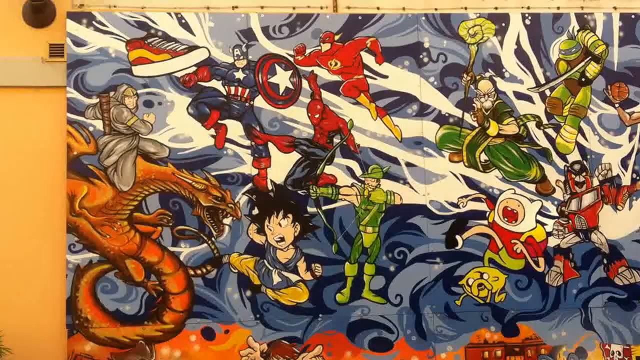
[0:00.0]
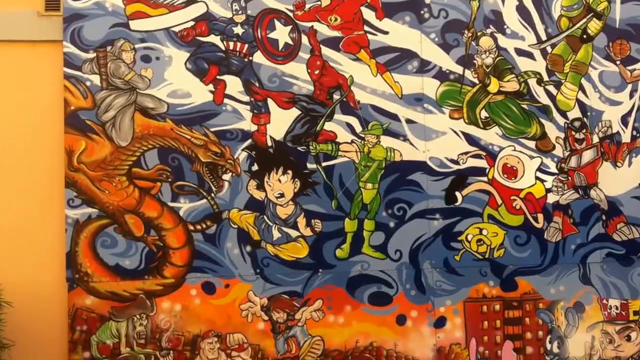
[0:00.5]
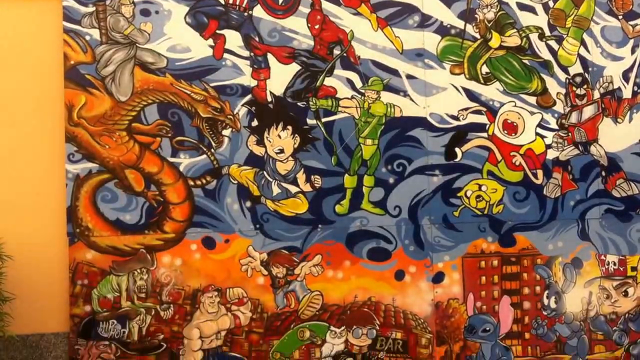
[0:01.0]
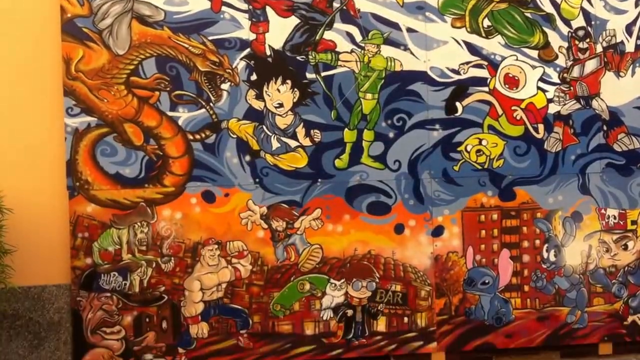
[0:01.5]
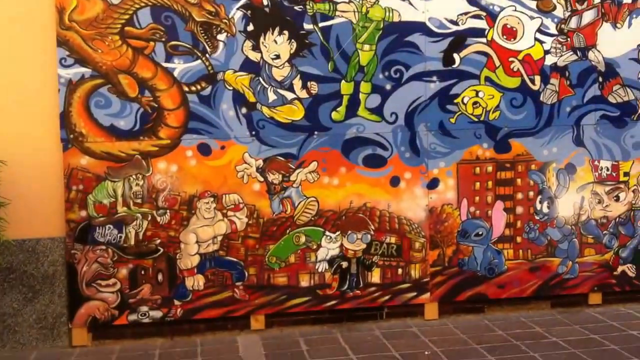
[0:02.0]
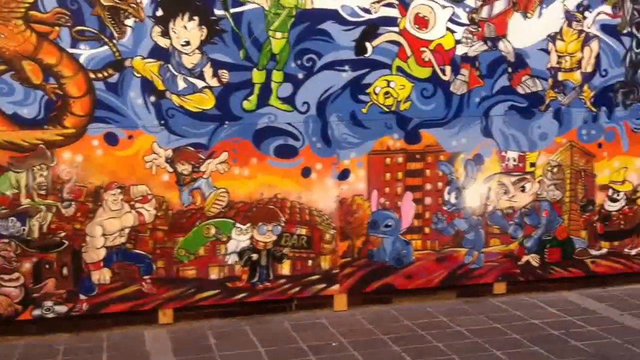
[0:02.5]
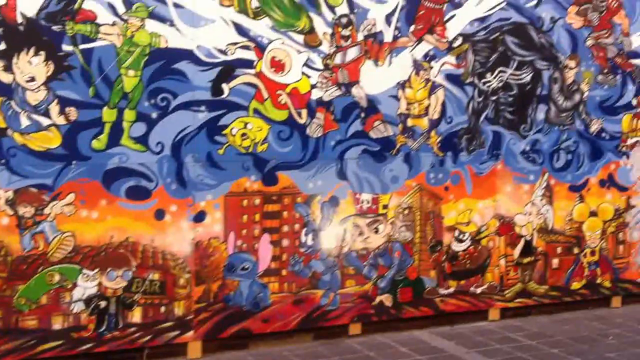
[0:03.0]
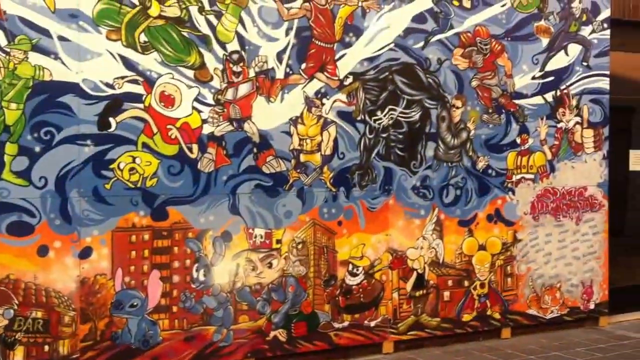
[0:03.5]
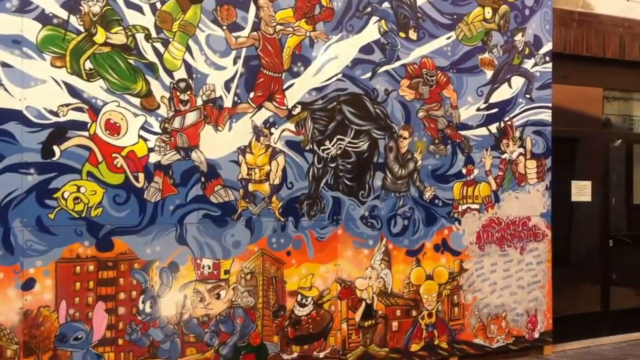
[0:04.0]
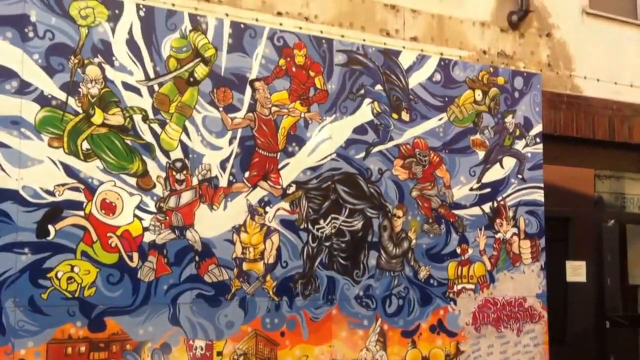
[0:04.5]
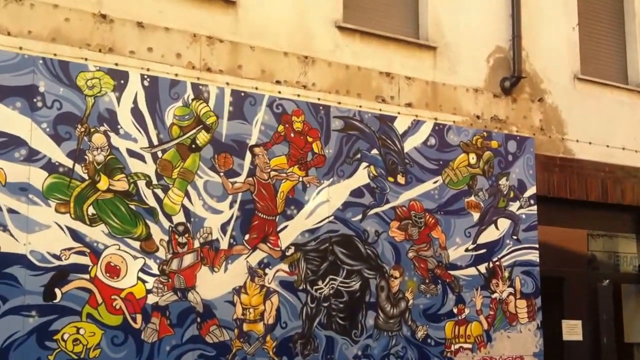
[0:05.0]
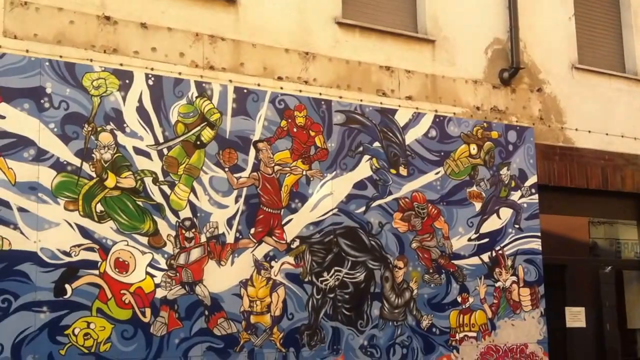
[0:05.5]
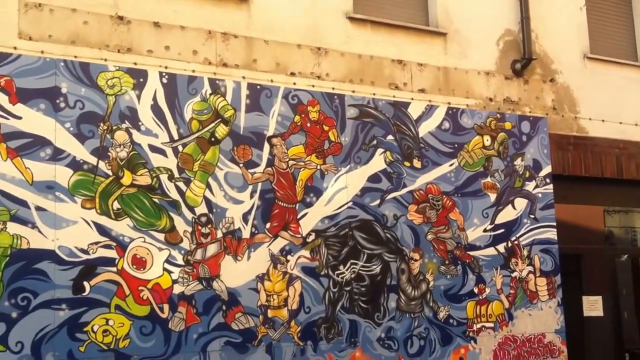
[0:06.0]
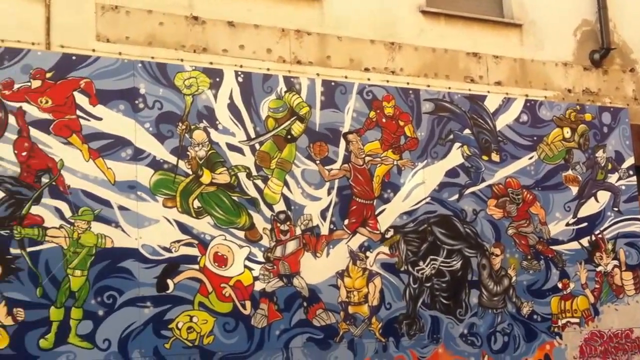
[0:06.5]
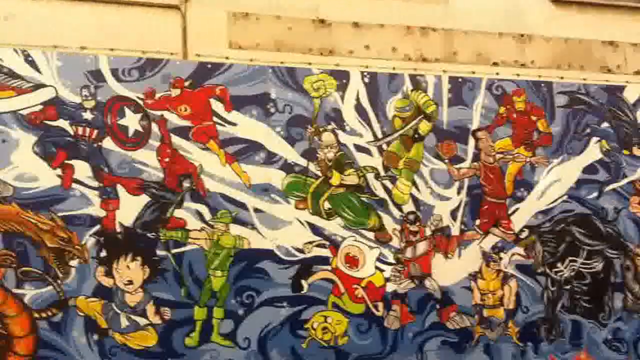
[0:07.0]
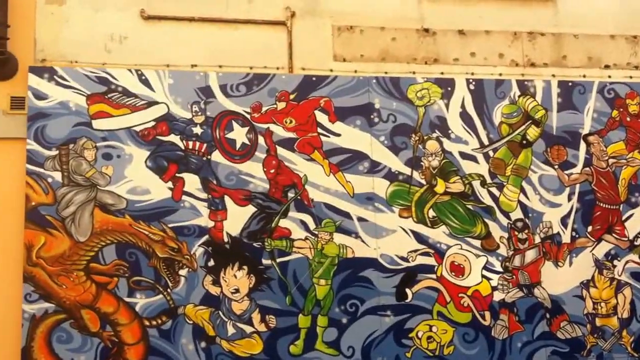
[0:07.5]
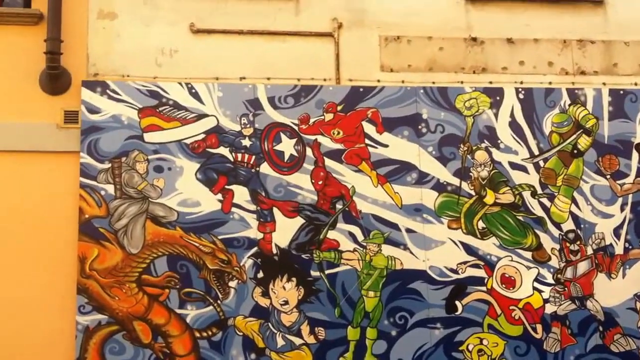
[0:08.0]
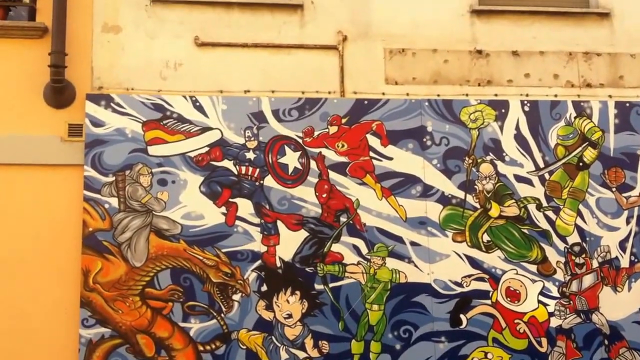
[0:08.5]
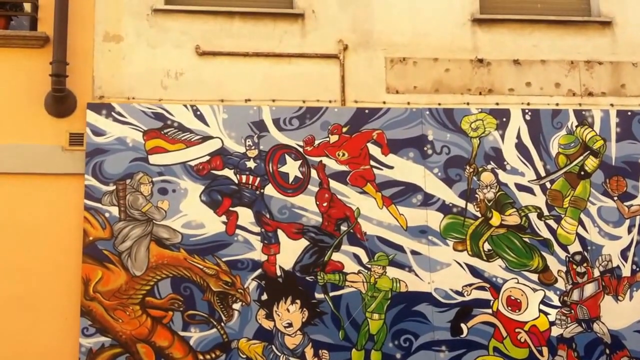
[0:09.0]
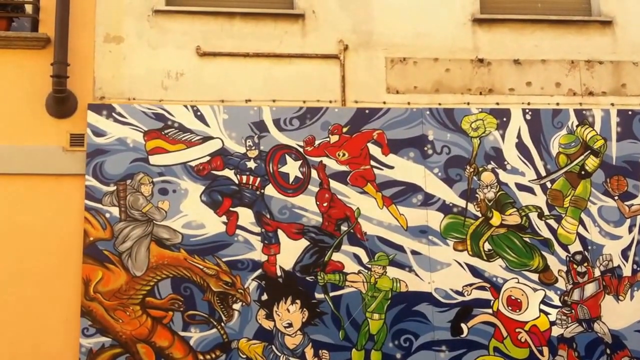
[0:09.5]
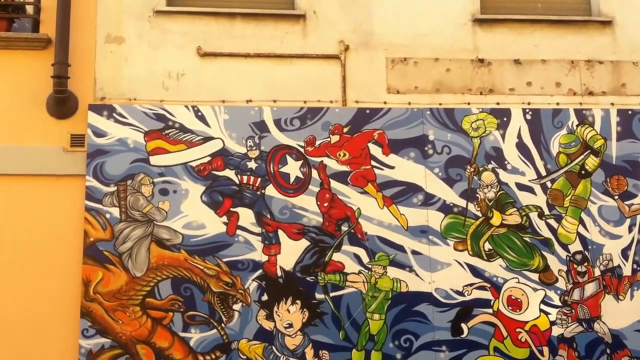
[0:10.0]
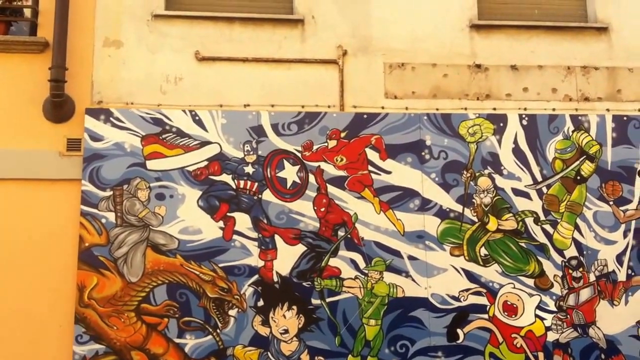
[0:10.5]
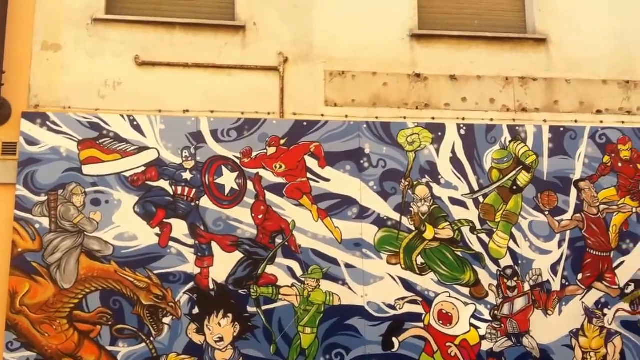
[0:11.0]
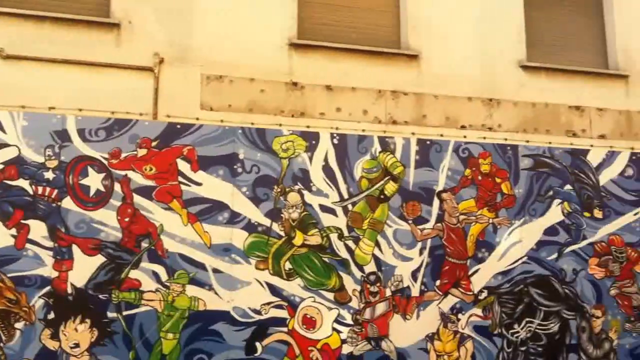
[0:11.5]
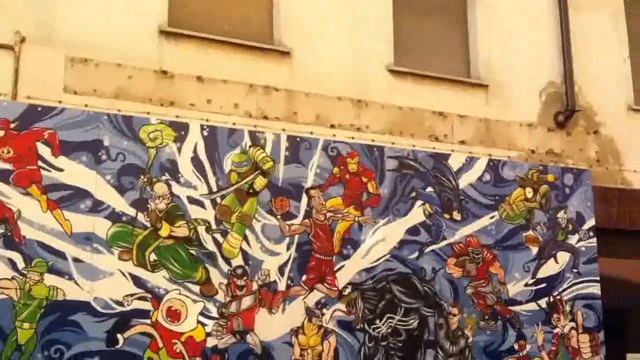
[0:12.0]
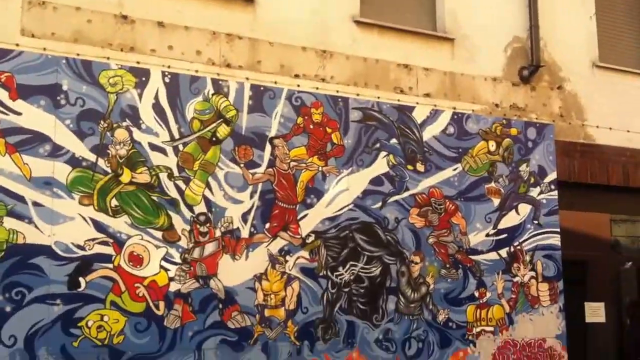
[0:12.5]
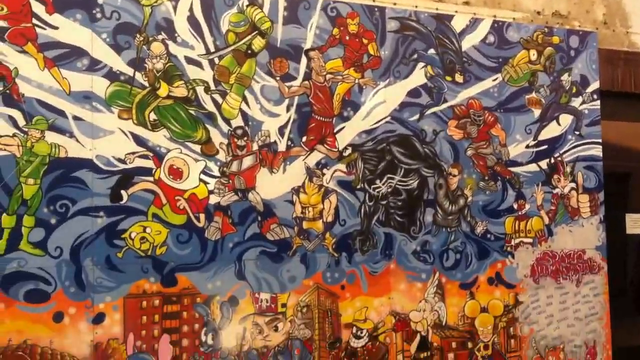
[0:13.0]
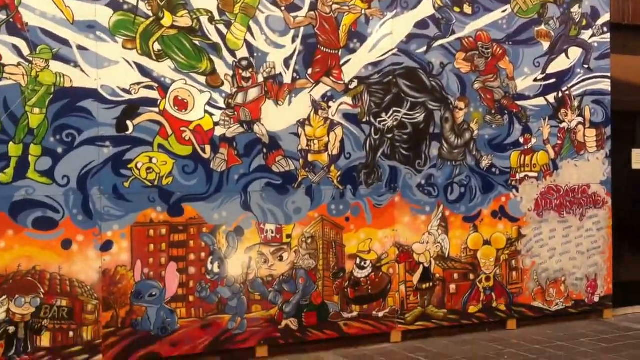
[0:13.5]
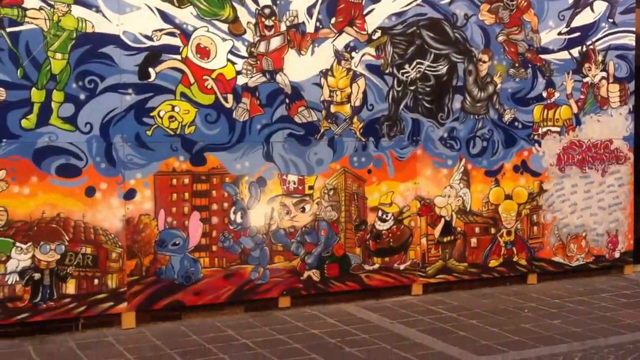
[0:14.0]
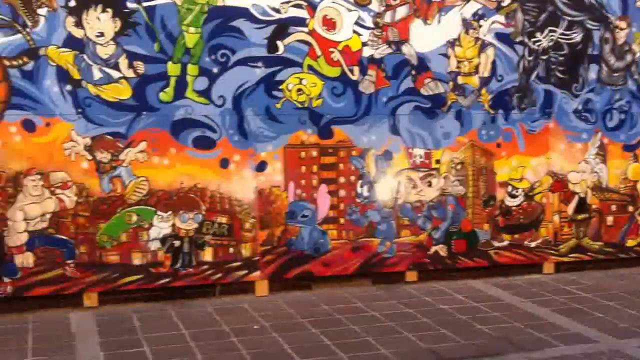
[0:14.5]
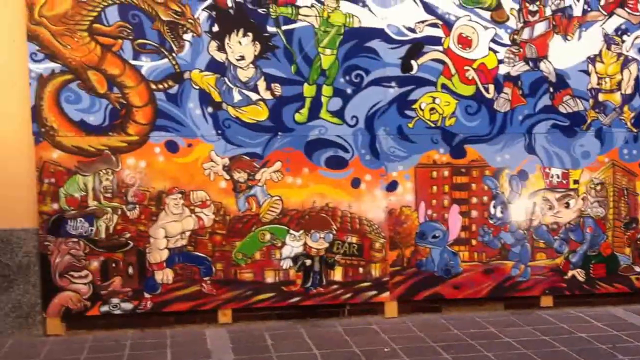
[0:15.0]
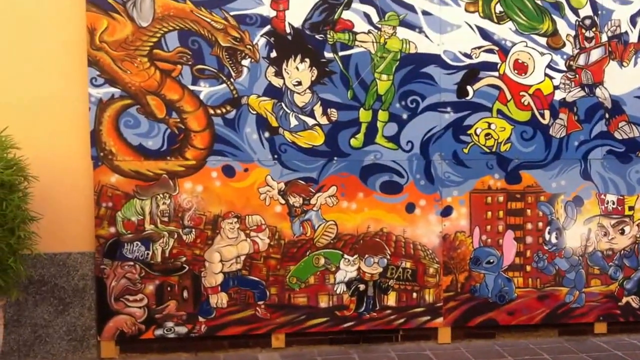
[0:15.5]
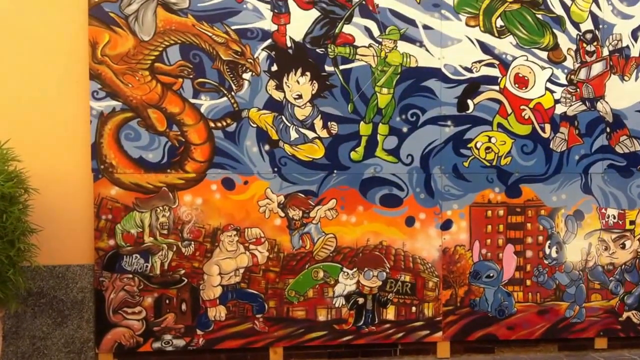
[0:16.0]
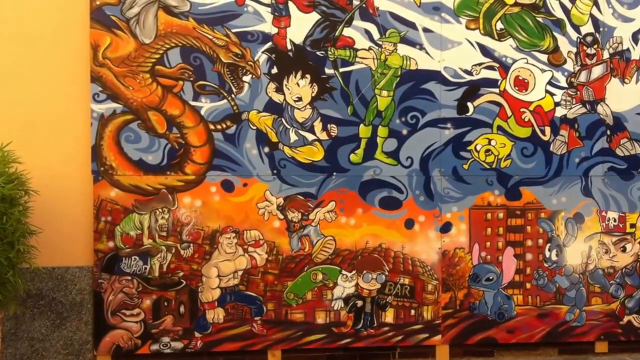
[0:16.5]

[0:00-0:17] The video shows superhero art, apparently a mural. Captain America is visible, along with what seem to be some anime characters and what appears to be Robin Hood in Lincoln green firing his bow and arrow. Spider-Man and Daredevil are also there, and the video moves across a very wide area showing dozens of superheroes and different characters, all from fairly modern movies. Someone is riding a dragon. Various superheroes appear, and possibly the Joker is in the far corner of the picture. At the bottom is Asterix, looking very happy, and there are some buildings at the bottom. At the top are the Ninja Turtles. There is also an unidentified basketball player, Iron Man, and what seems to be some kind of wizard.